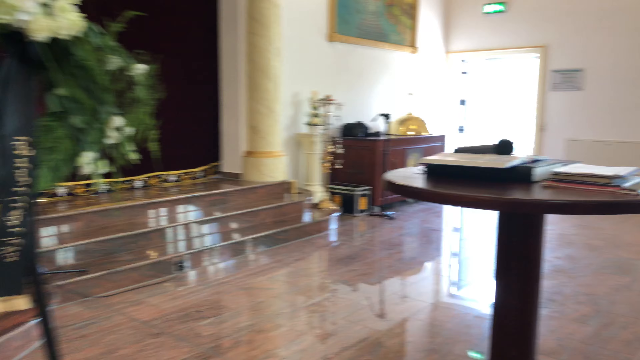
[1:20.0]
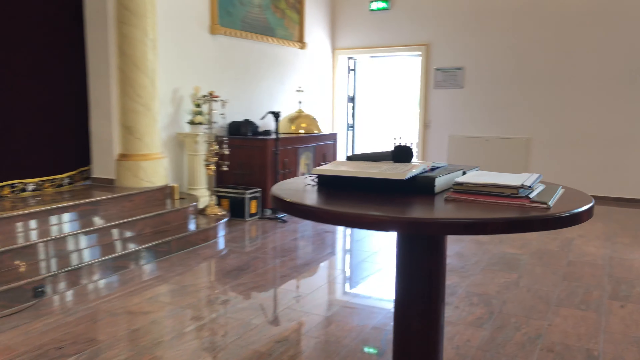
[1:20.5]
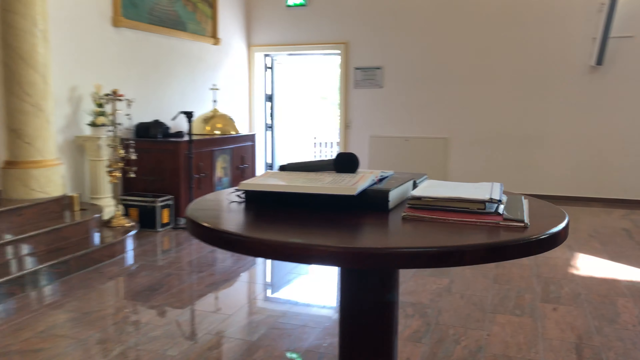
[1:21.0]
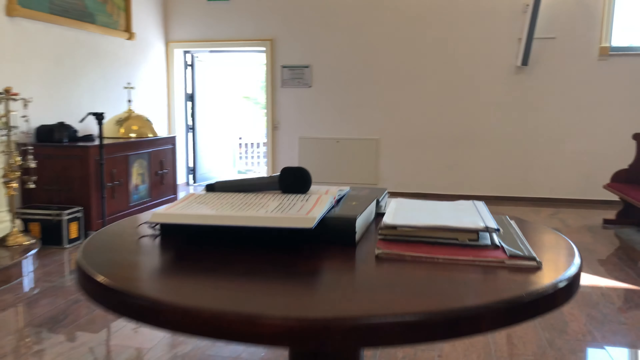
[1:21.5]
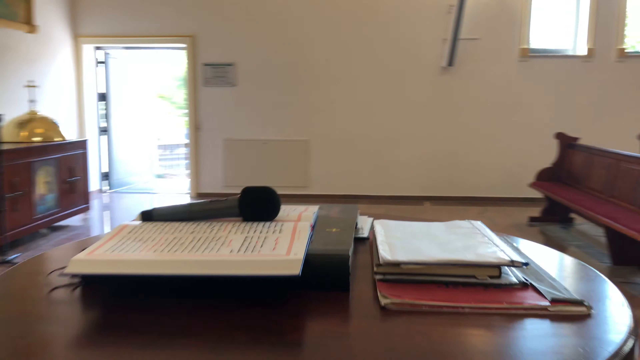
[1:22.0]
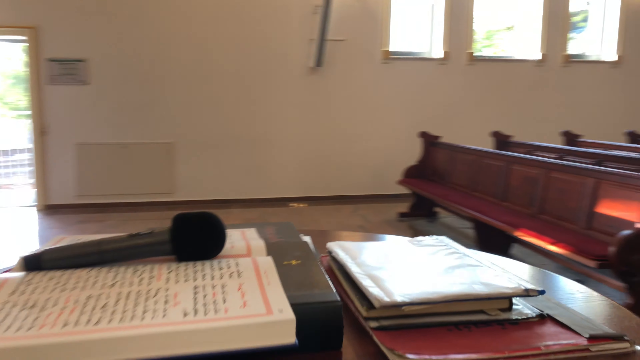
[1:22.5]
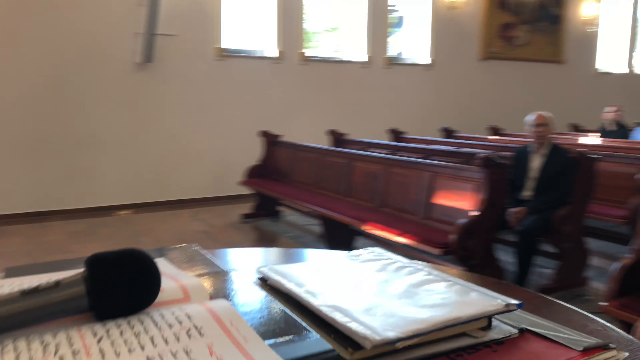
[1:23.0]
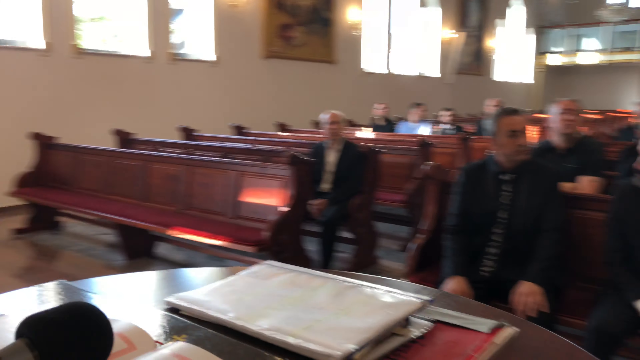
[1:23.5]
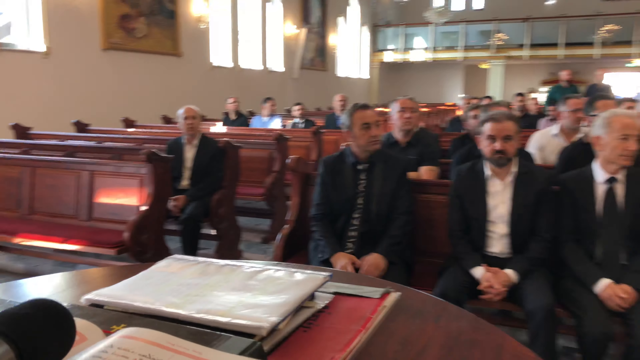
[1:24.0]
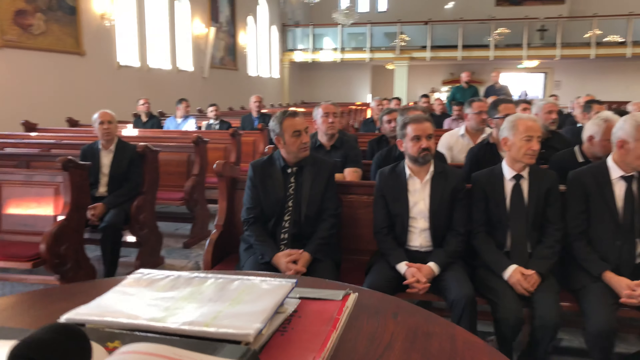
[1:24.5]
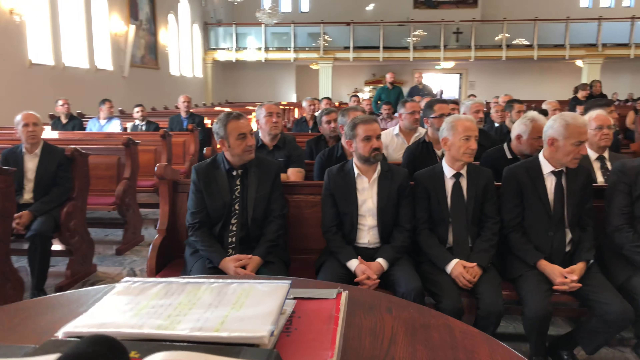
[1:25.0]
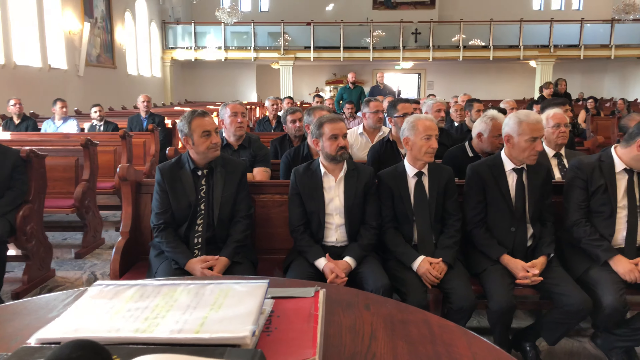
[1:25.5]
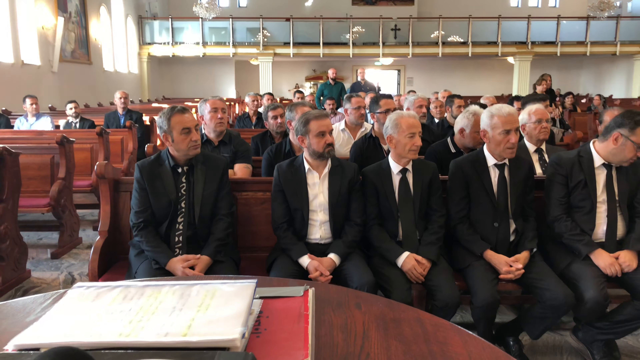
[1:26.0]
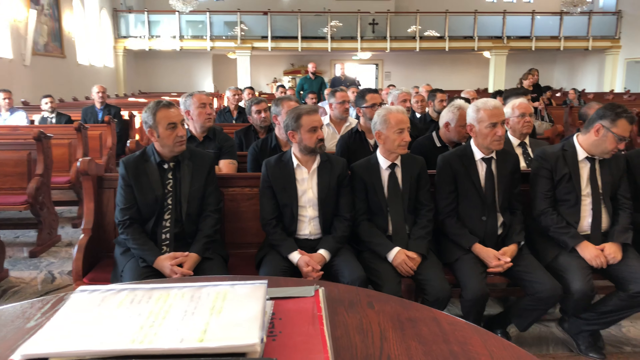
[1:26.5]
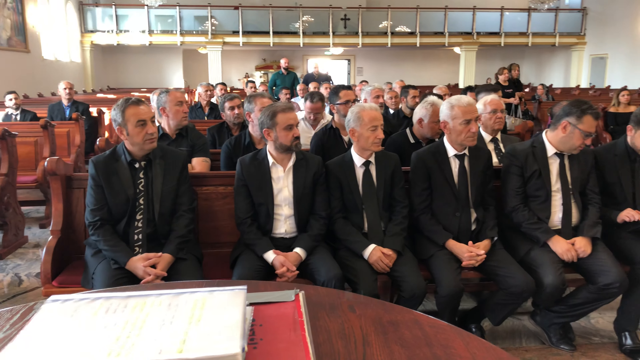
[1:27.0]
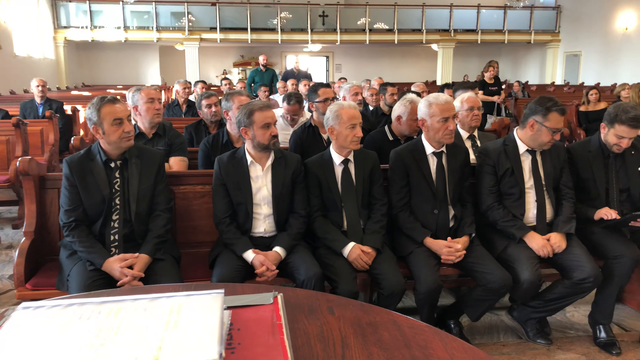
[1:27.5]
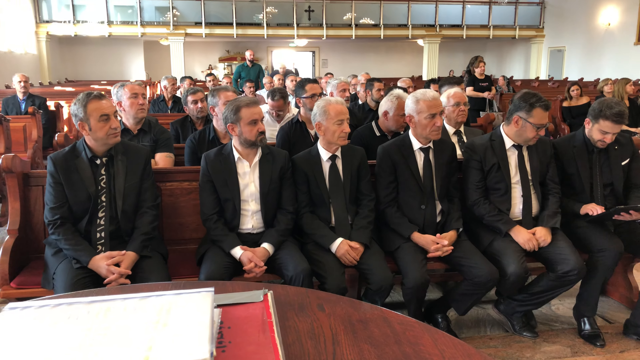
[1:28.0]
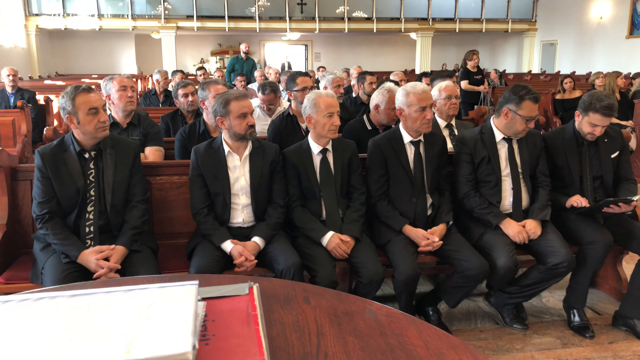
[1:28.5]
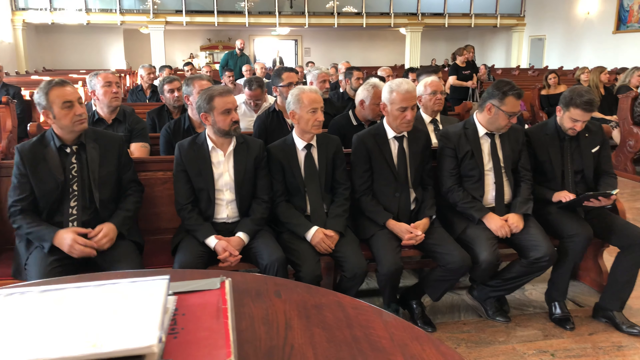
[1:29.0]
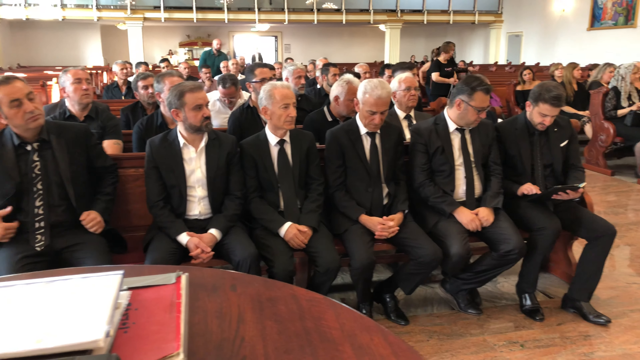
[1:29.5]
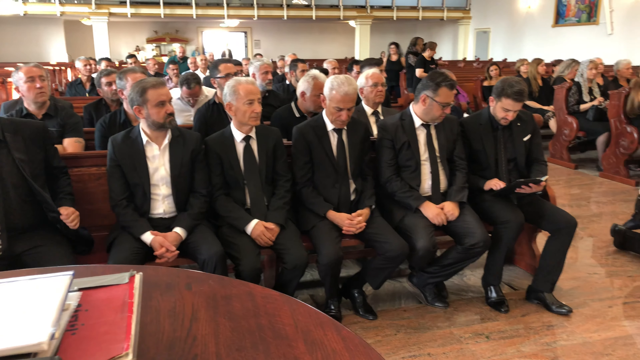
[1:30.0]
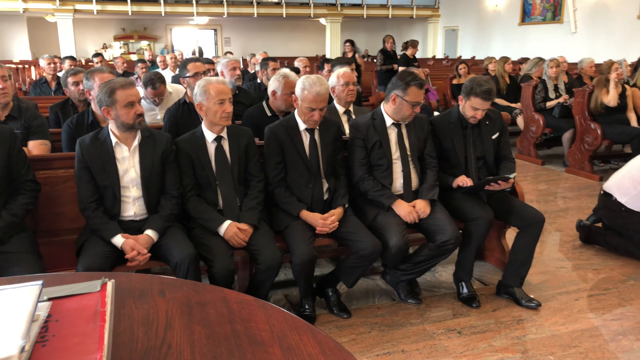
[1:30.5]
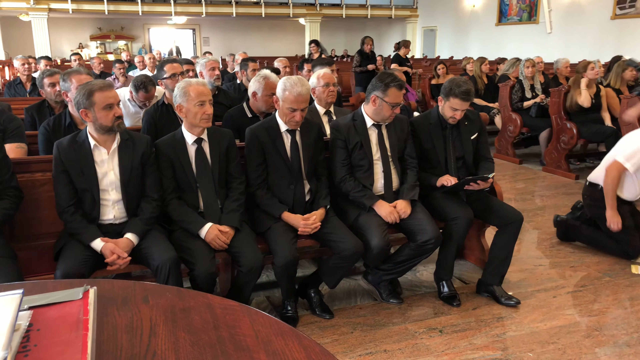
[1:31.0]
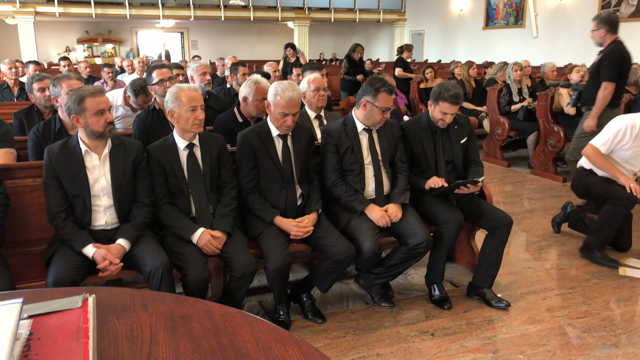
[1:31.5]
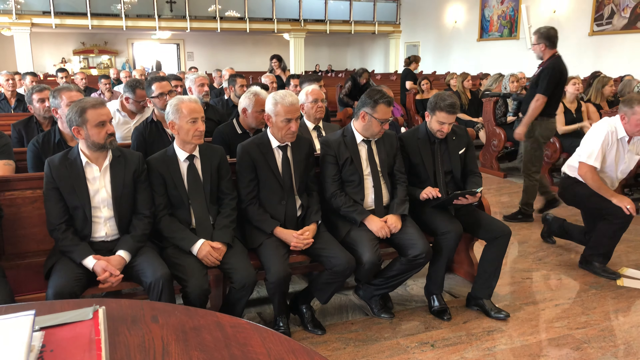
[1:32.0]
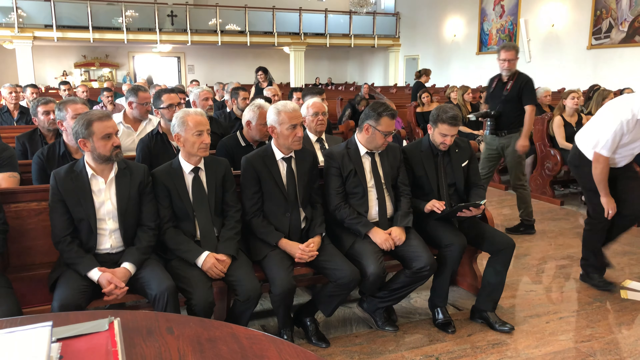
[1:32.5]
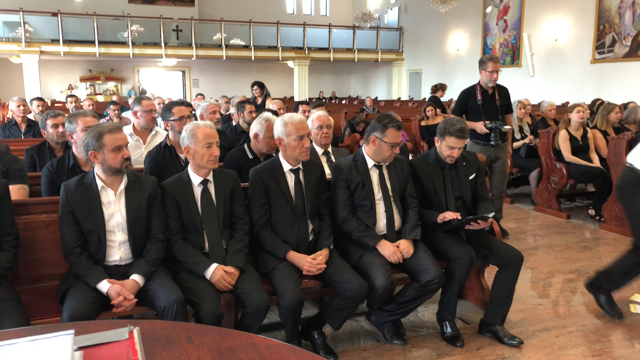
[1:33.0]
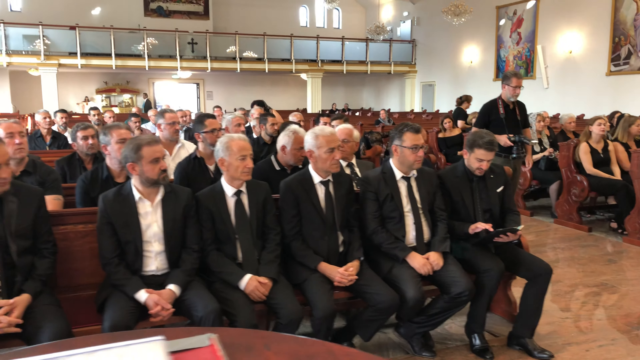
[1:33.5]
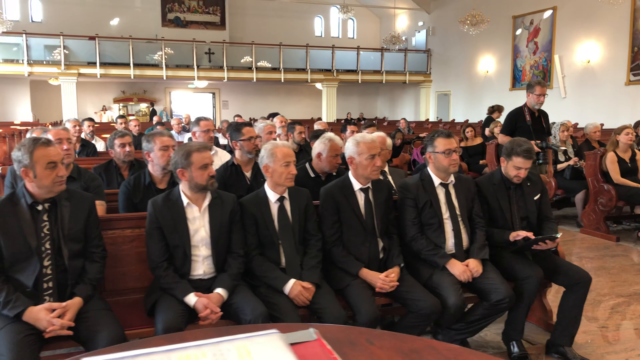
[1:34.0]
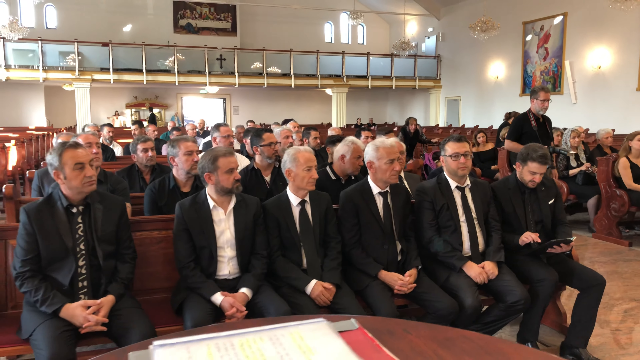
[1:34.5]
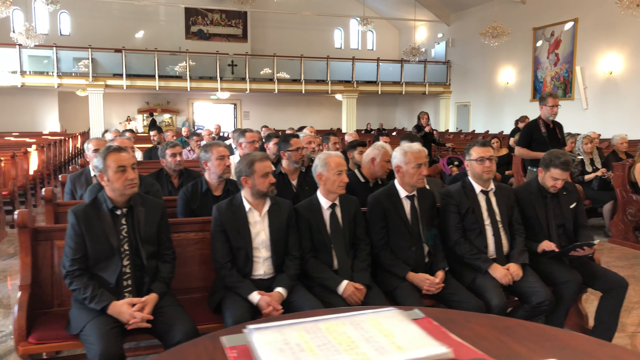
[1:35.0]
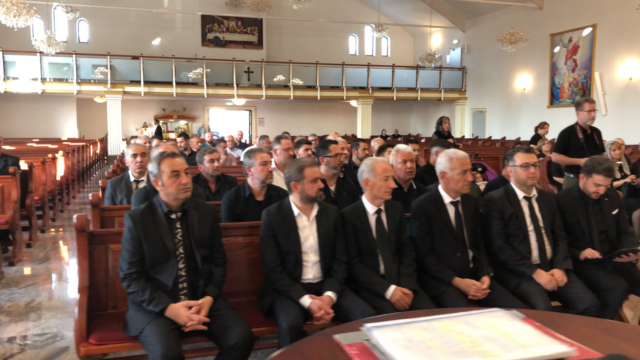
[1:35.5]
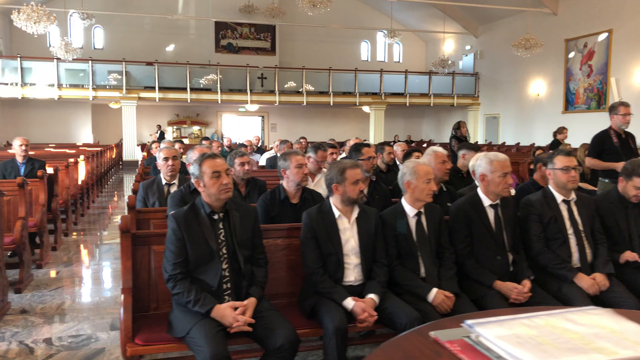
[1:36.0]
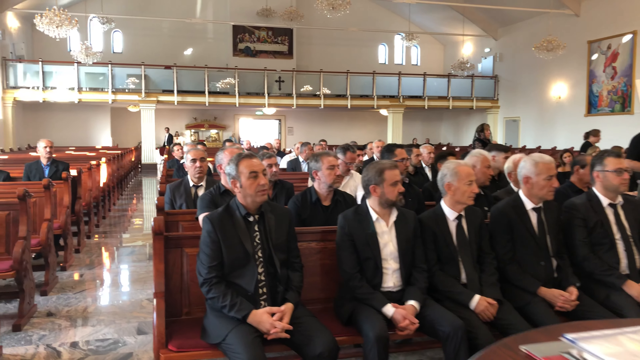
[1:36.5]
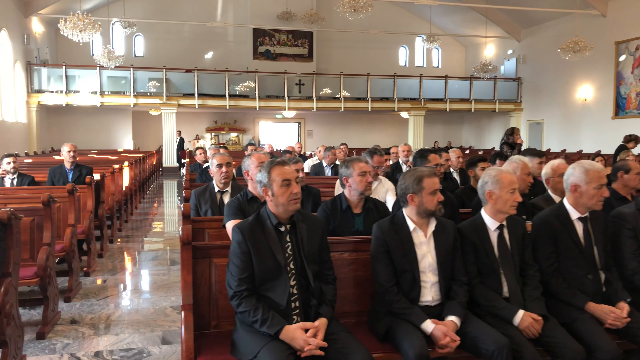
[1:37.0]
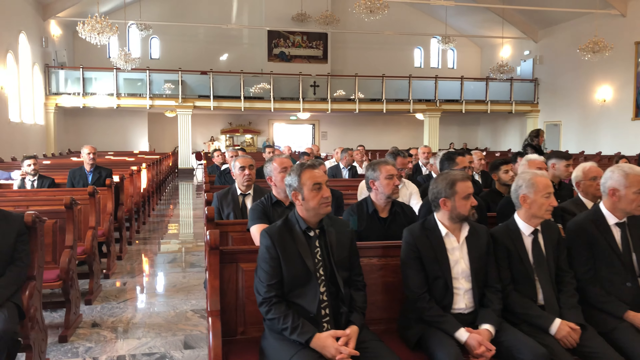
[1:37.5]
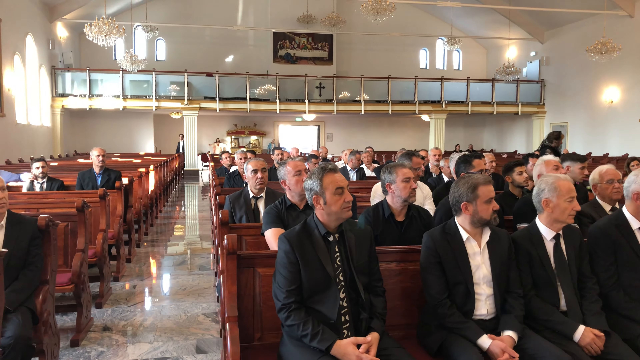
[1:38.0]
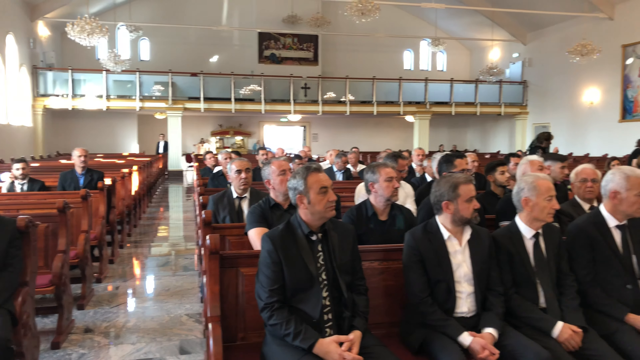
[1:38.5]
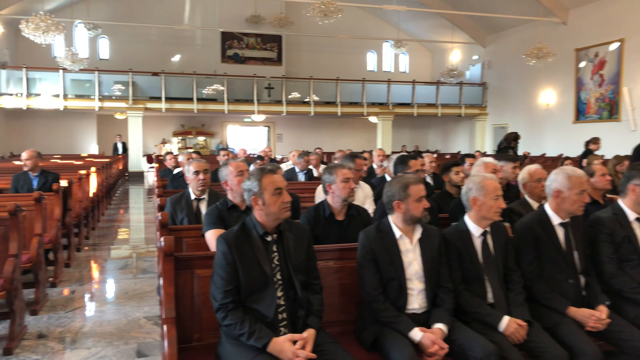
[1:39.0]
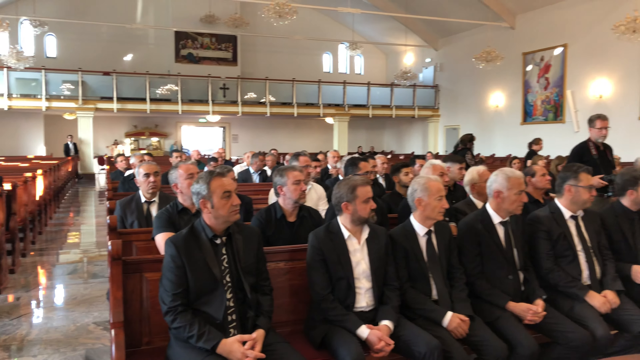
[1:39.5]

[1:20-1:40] To the right of the stage is a table in the middle of the floor with some papers and what appears to be a microphone on top, another table with various items on it, and possibly the exit door. There is a green light over the door and a bright light coming through it, possibly from outside. The camera continues to pan around to the congregation, where the men appear to be seated on the left and the women on the right. They are mostly wearing black suits, and the women are wearing black dresses. Some people in the congregation are looking down, reading a text or possibly looking at their phones. A cameraman walks around in the aisle, and the camera keeps panning around the crowd in attendance, also showing the back of the church: an upper walkway with a glass wall and a cross on it as a decoration. There are multiple chandeliers throughout the building and arched windows at the top with bright light shining through them. As the camera continues to pan, the art on the church walls is visible.